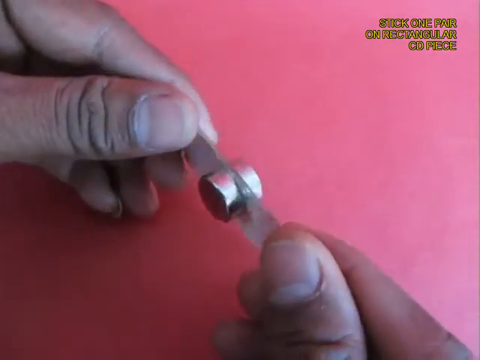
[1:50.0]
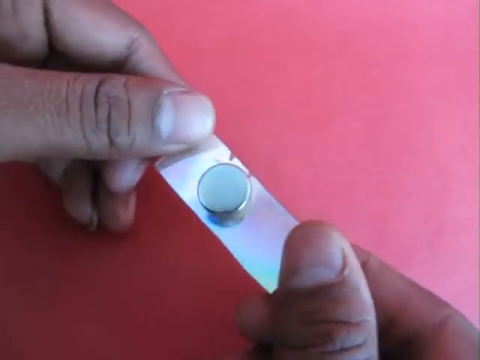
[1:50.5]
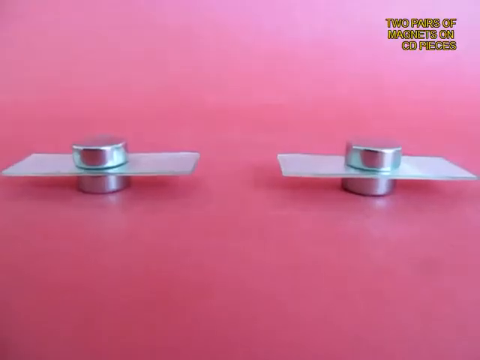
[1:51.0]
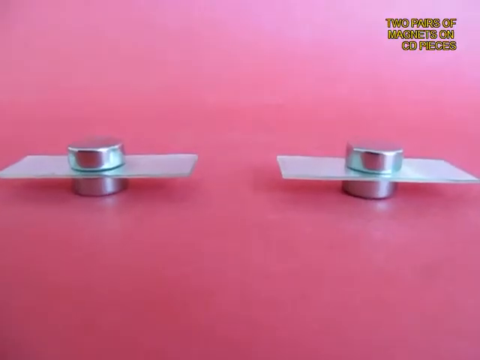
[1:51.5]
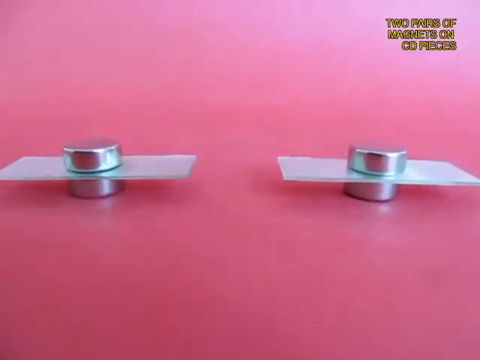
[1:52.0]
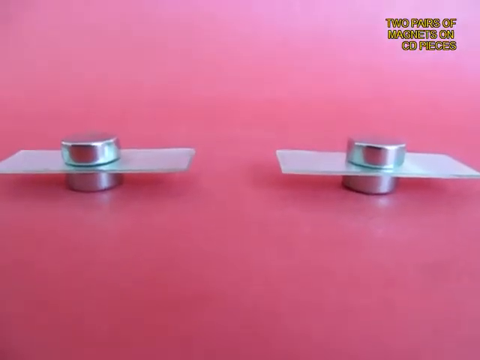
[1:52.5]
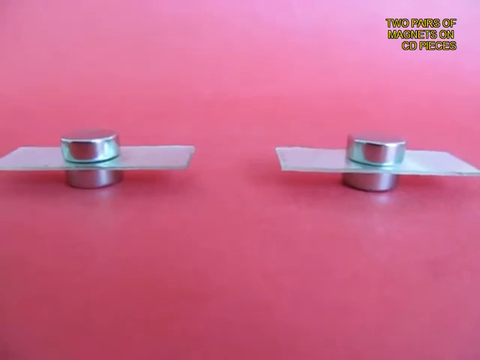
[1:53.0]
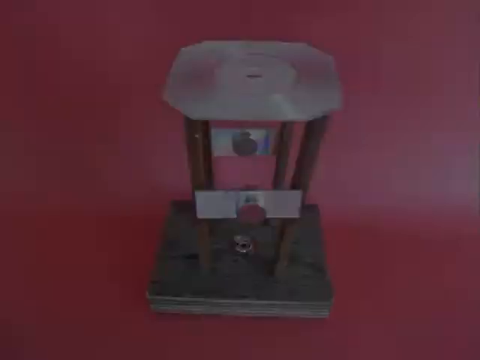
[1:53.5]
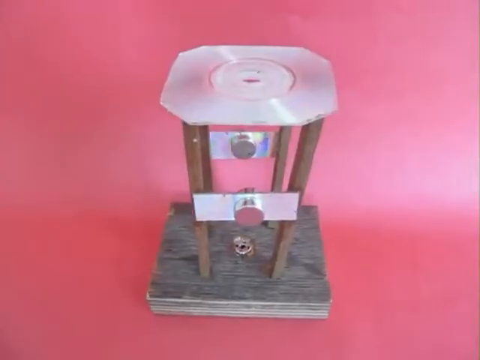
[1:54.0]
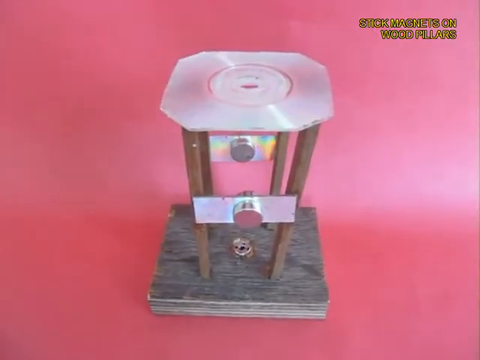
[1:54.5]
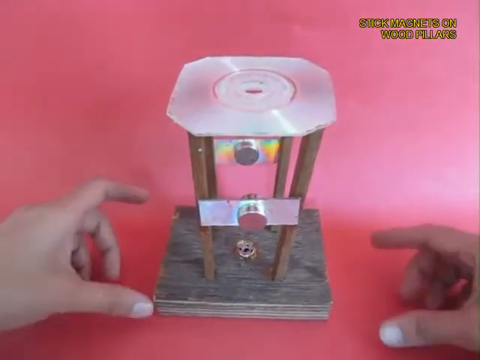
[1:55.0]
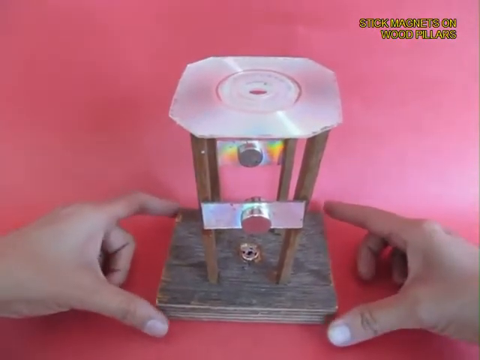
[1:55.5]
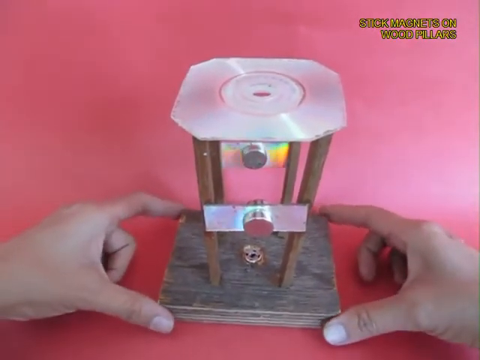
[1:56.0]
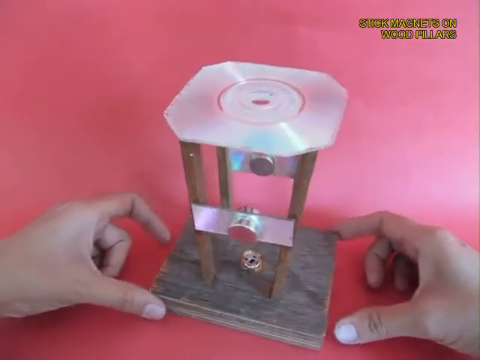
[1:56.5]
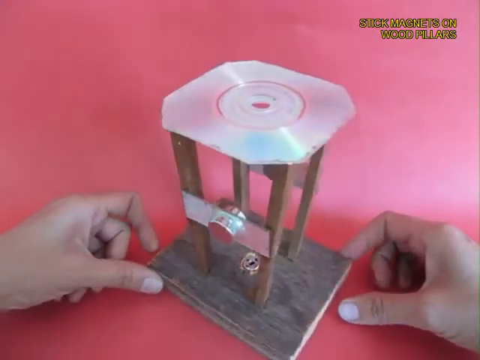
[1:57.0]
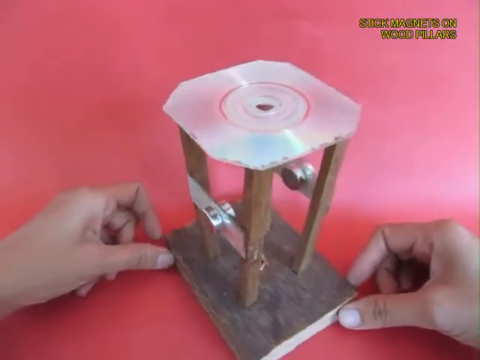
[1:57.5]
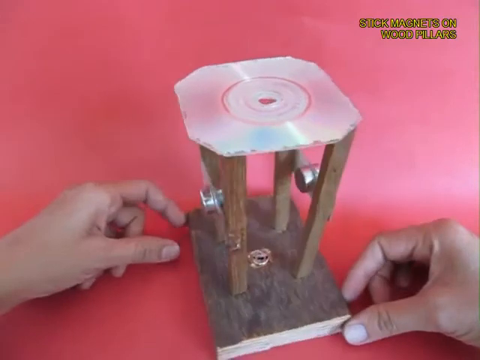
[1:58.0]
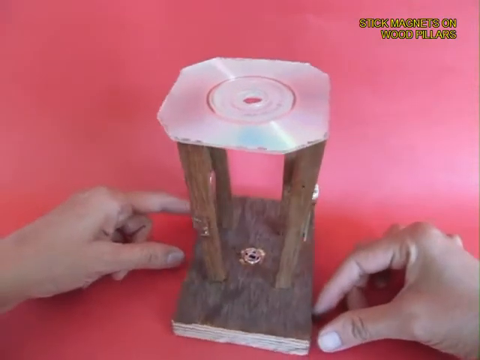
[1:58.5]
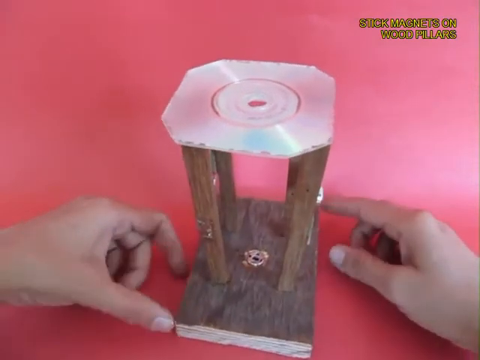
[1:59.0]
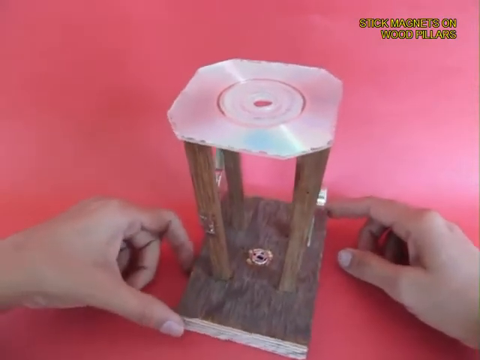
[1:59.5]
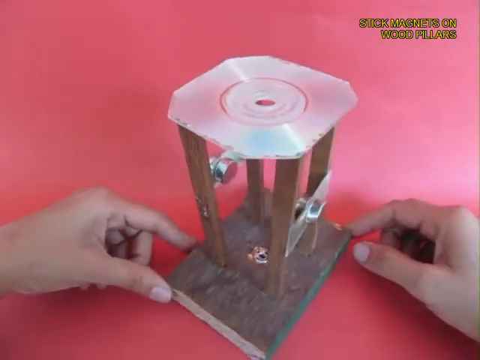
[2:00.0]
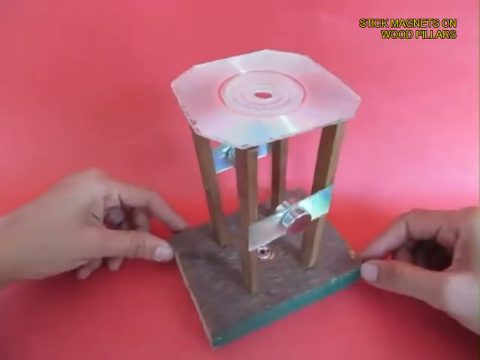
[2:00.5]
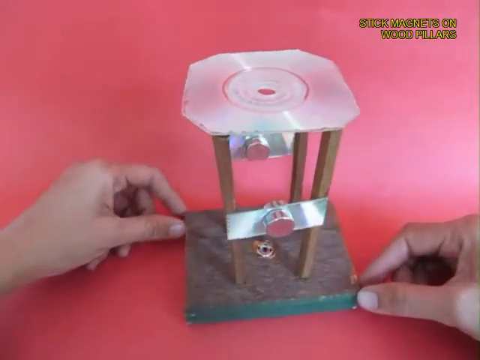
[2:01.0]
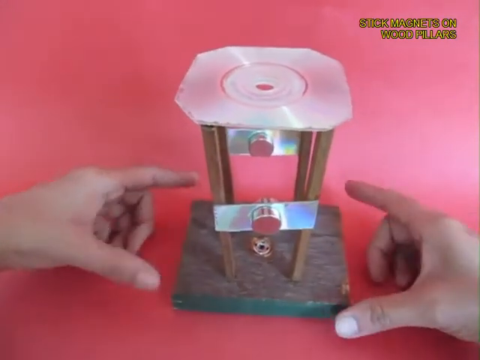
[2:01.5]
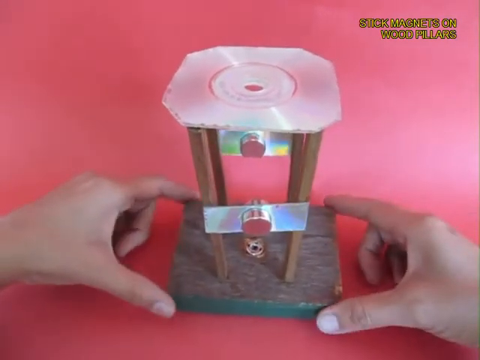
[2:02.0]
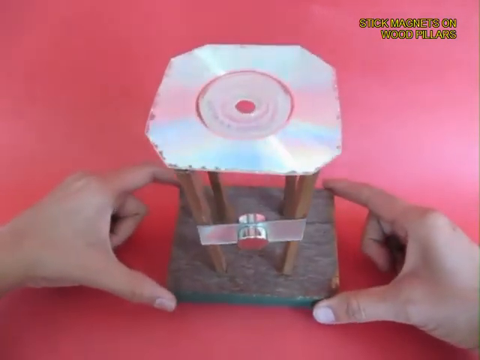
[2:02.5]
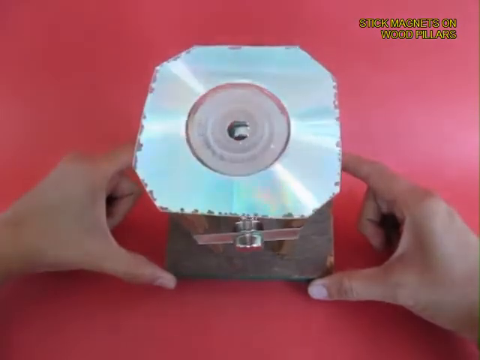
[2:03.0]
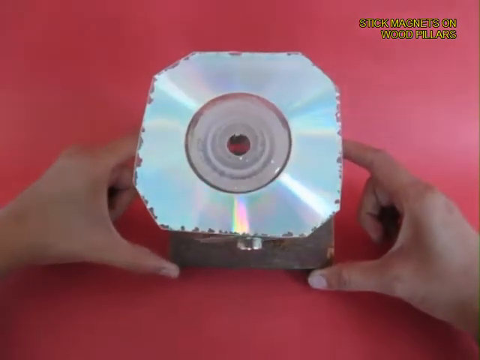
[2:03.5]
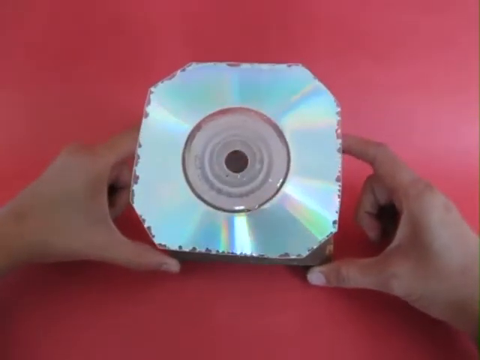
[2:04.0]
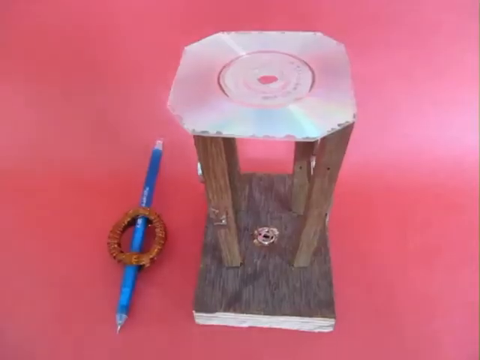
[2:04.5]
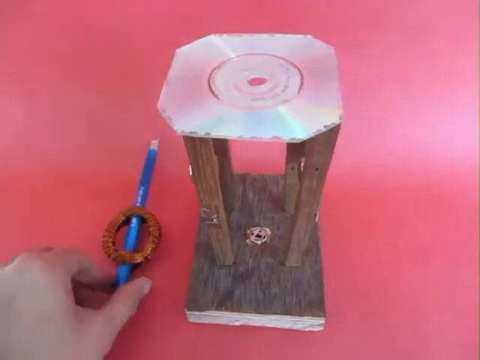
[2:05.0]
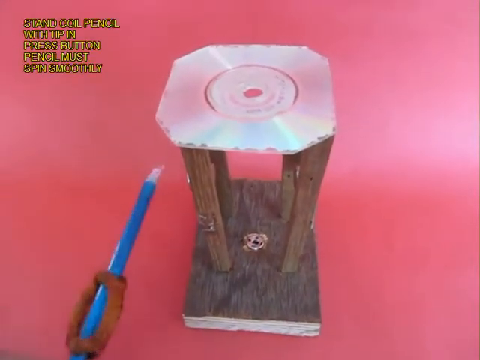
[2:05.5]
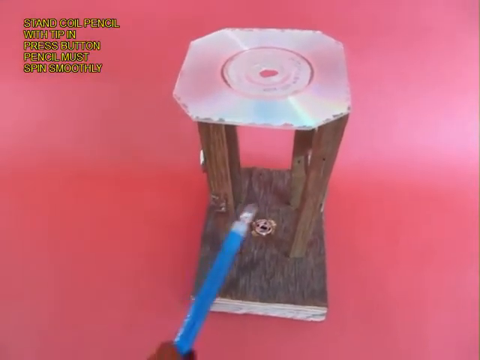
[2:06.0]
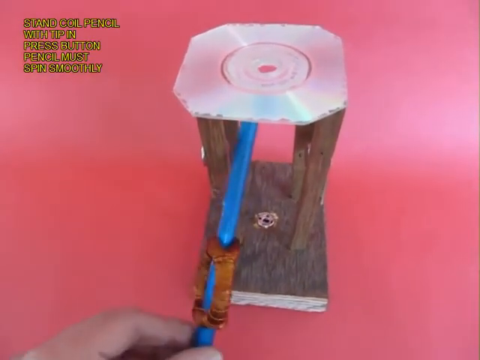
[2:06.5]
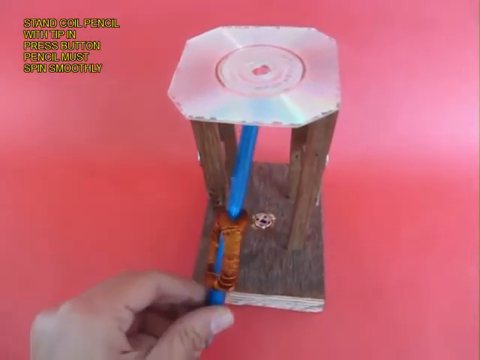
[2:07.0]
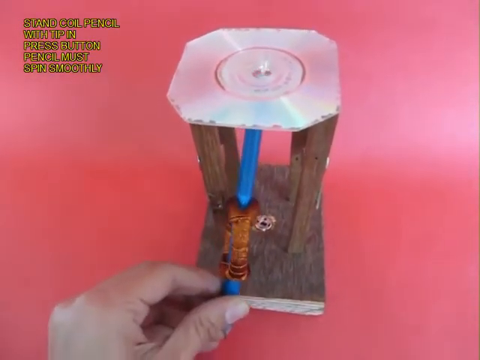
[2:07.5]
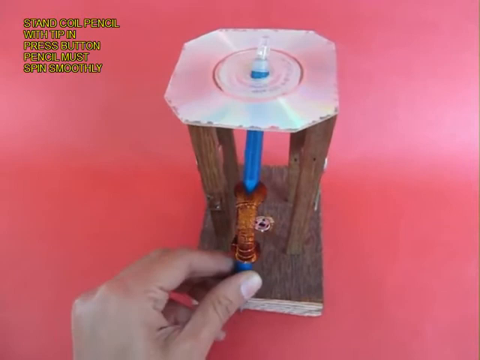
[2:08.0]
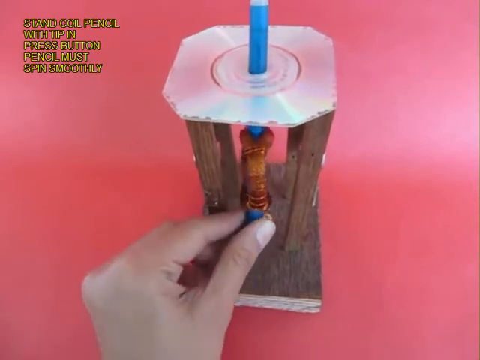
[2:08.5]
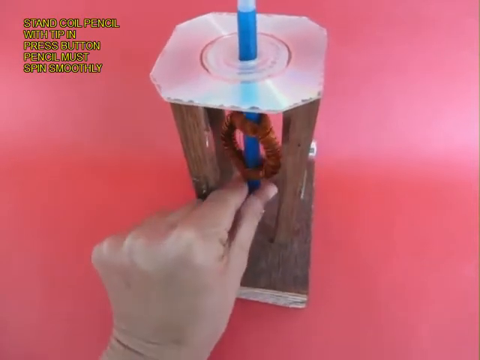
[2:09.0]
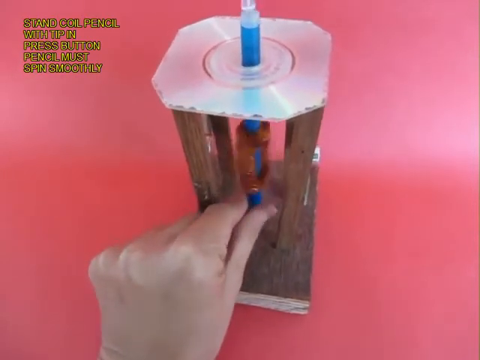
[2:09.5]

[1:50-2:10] Holding the CD piece with magnets on its left and right sides in both hands, they flip it over to show both sides. In a new shot, two CD pieces are on the red table with a magnet on the top and bottom holding them together, one on the left side and one on the right side, right next to each other with a gap in the middle, and the camera moves closer to the magnets. The scene transitions to the stick magnets on the wood pillars: the structure has the CD piece on top, the four wooden legs, and the wooden board at the bottom with the press button. Both hands come into the frame holding the bottom of the wooden panel and turn it clockwise toward the right to show all around the wooden pillars. In a new shot, the coil pencil stands up inside the CD; they stick it in there and it twirls around.